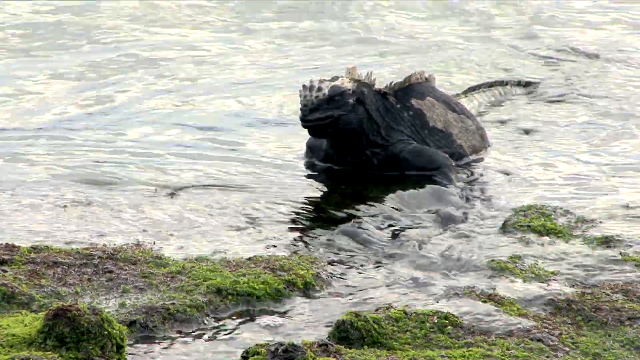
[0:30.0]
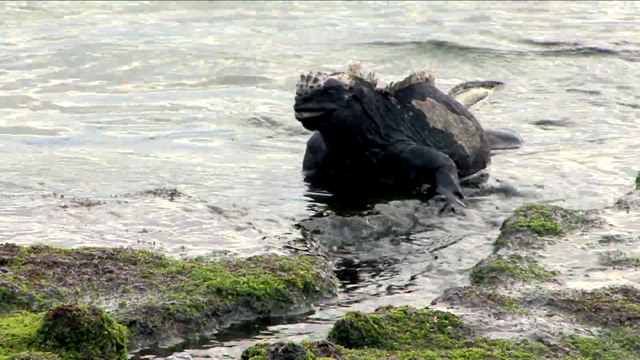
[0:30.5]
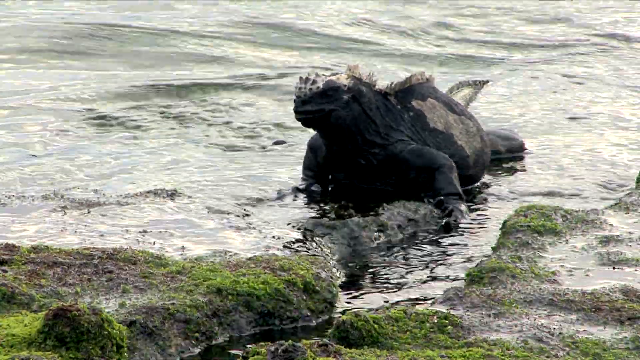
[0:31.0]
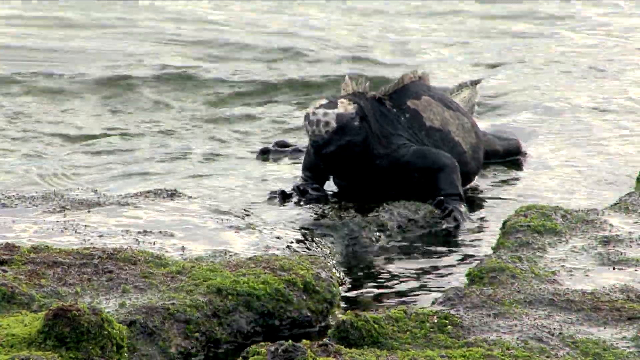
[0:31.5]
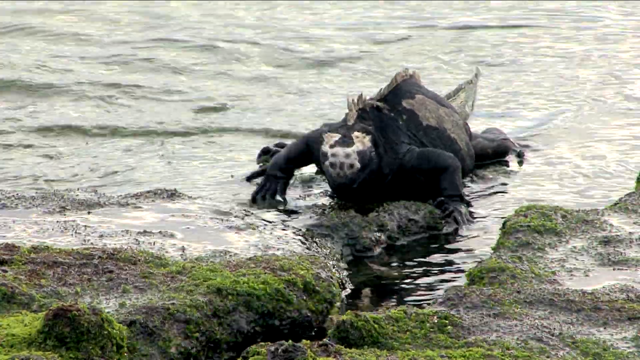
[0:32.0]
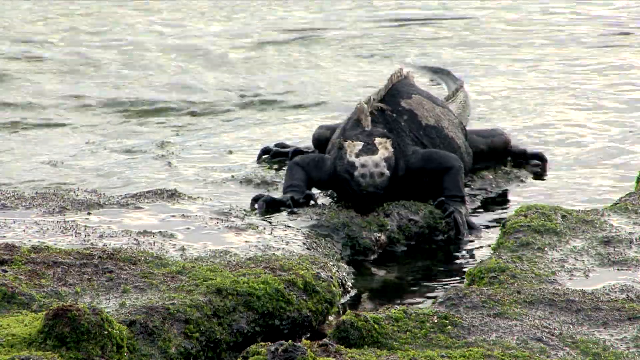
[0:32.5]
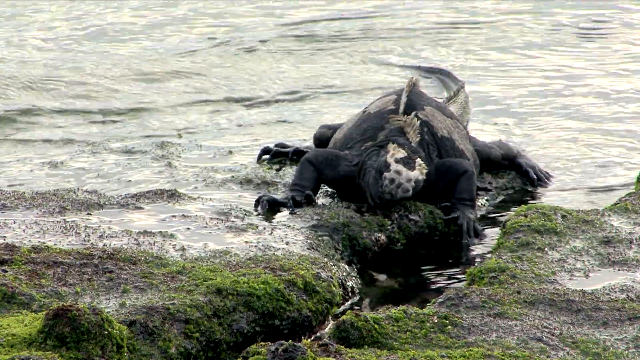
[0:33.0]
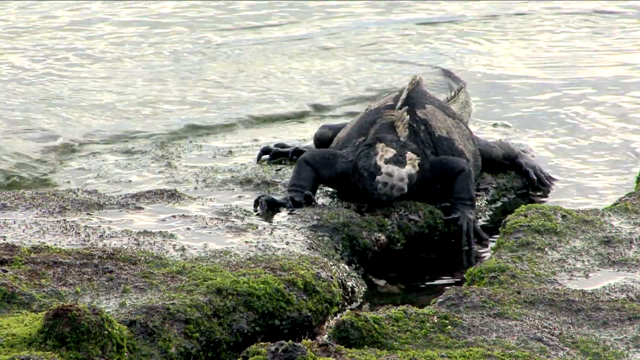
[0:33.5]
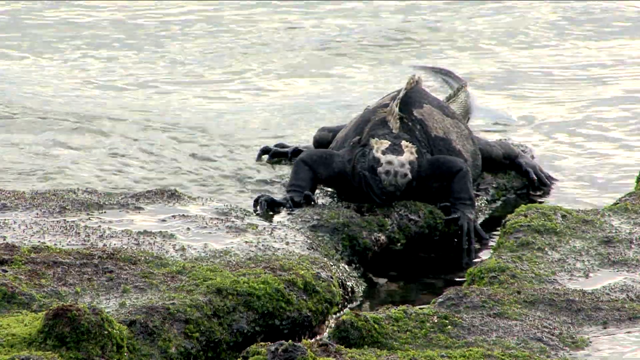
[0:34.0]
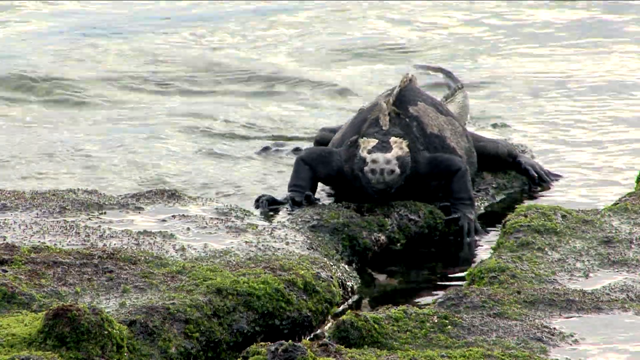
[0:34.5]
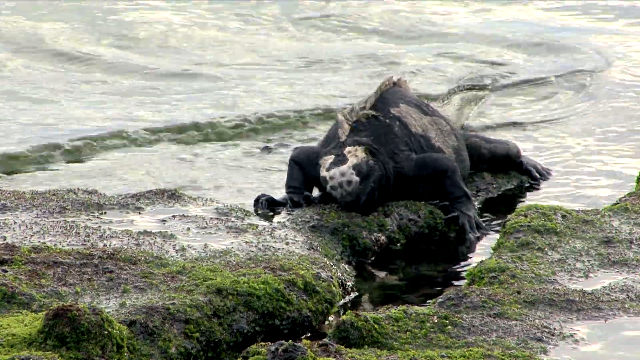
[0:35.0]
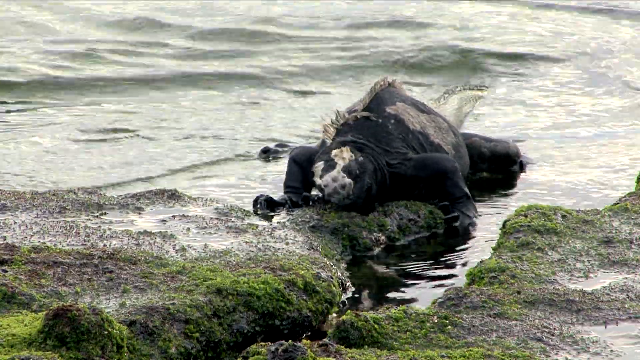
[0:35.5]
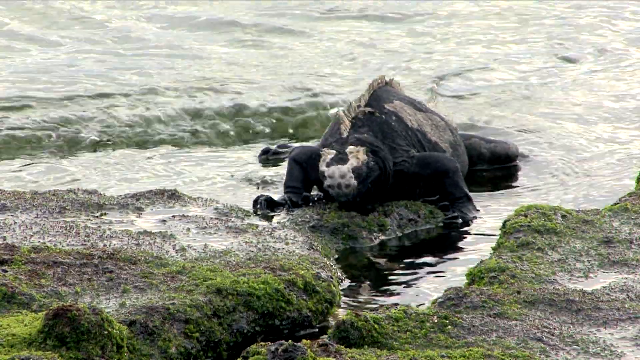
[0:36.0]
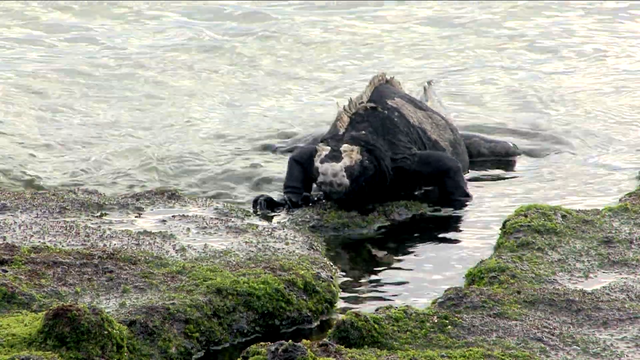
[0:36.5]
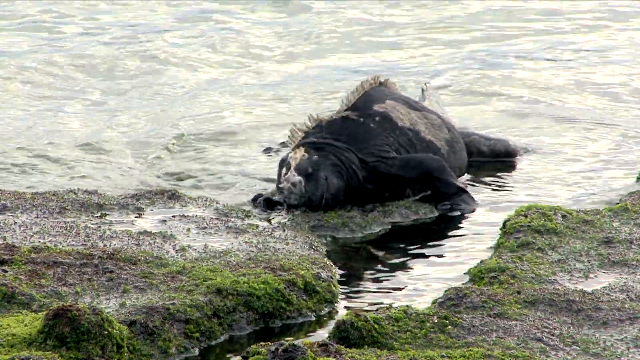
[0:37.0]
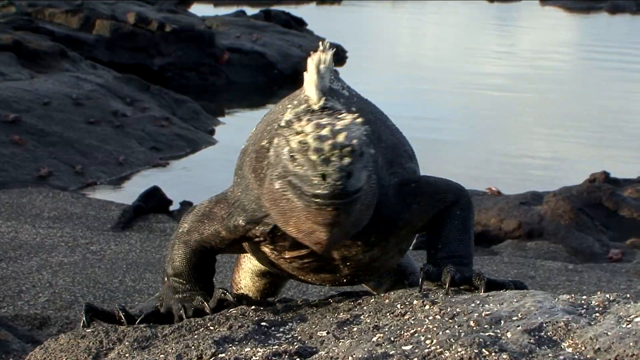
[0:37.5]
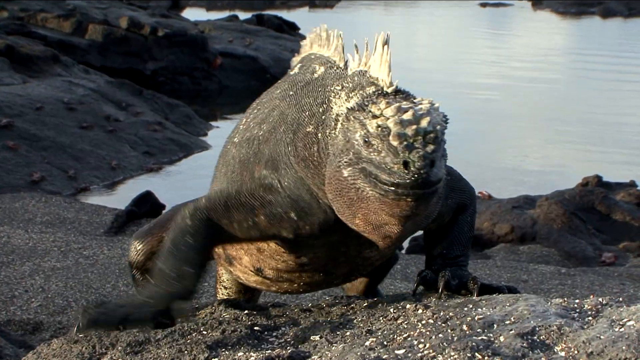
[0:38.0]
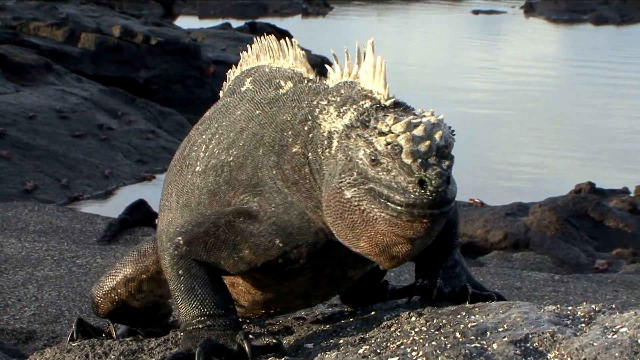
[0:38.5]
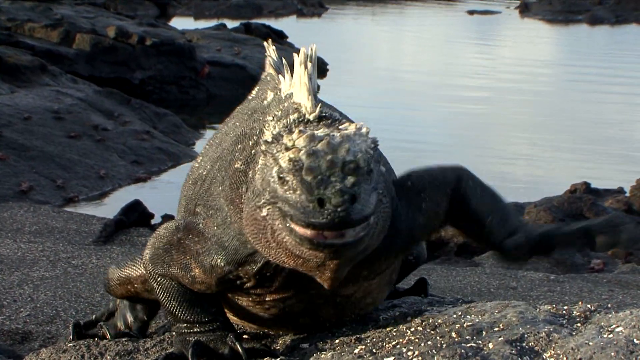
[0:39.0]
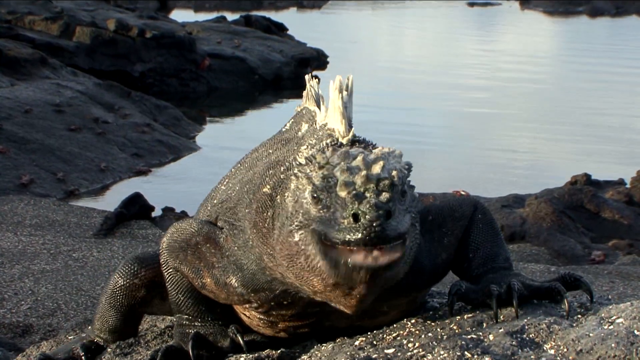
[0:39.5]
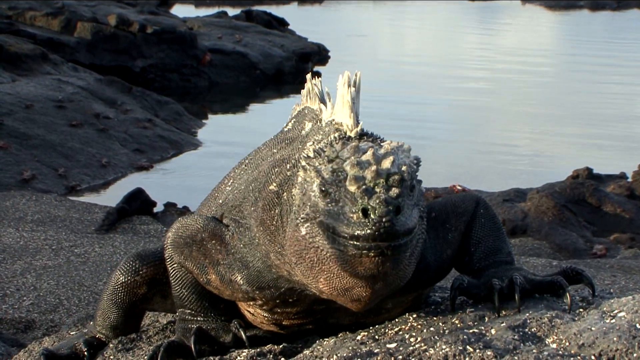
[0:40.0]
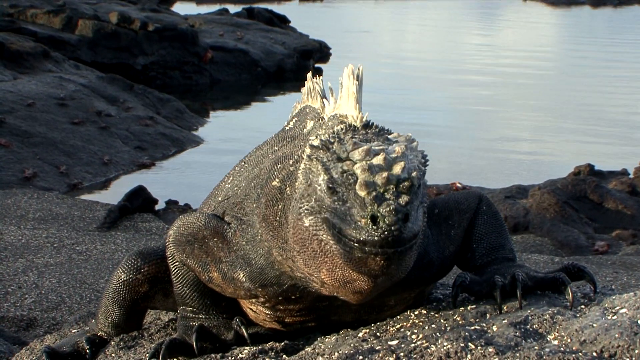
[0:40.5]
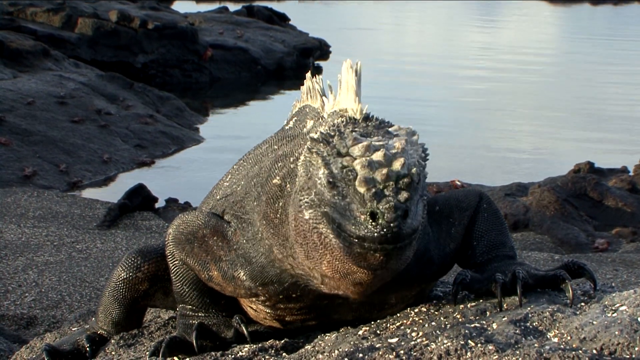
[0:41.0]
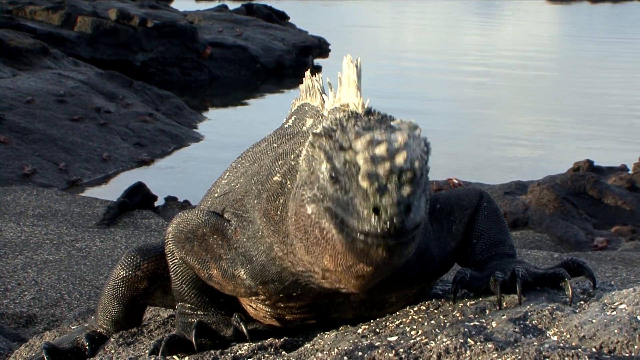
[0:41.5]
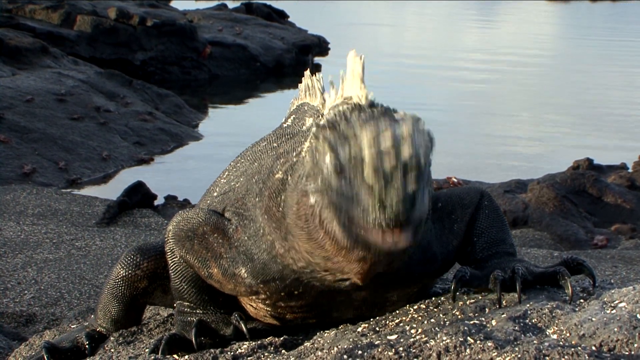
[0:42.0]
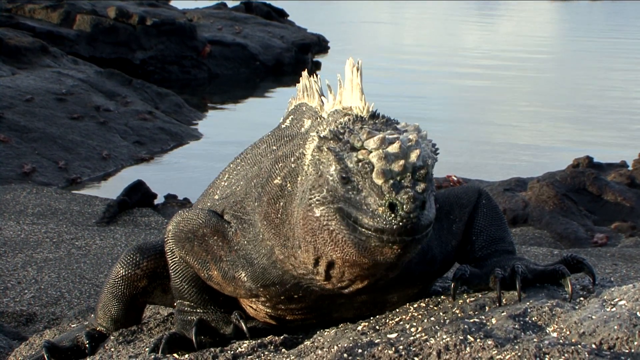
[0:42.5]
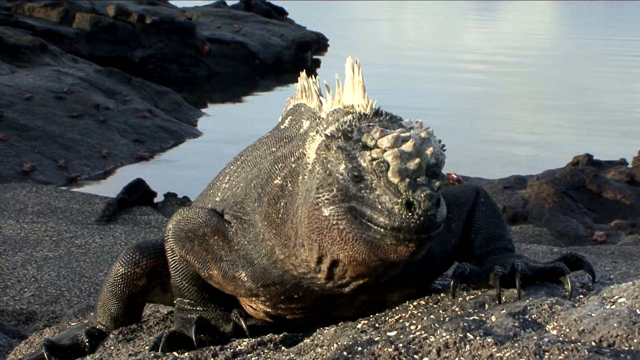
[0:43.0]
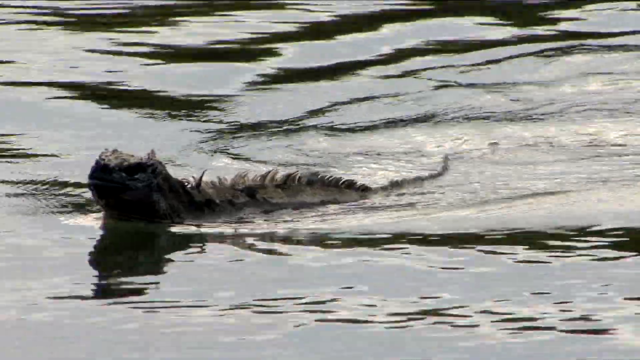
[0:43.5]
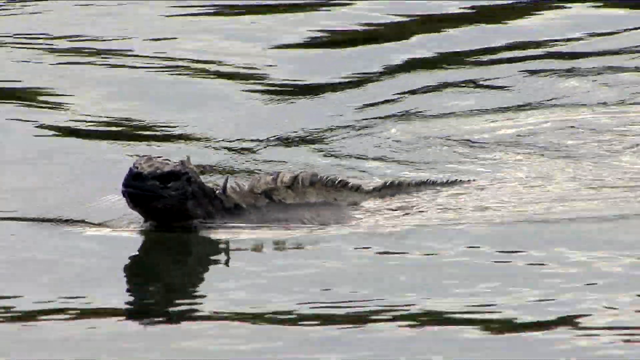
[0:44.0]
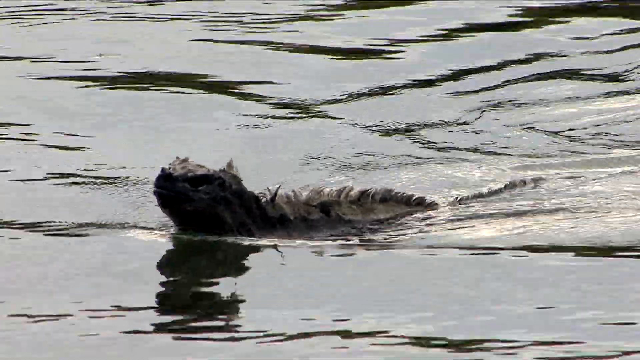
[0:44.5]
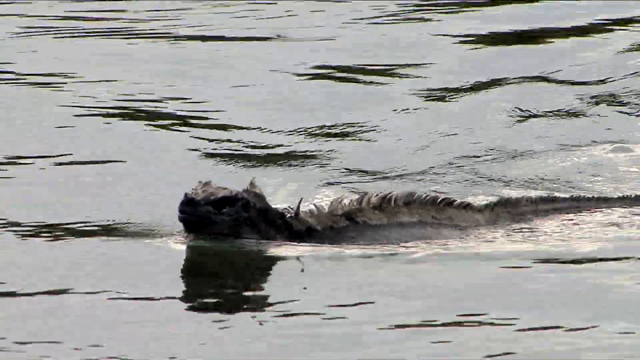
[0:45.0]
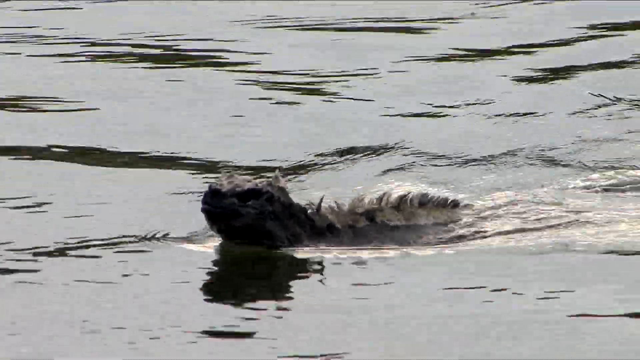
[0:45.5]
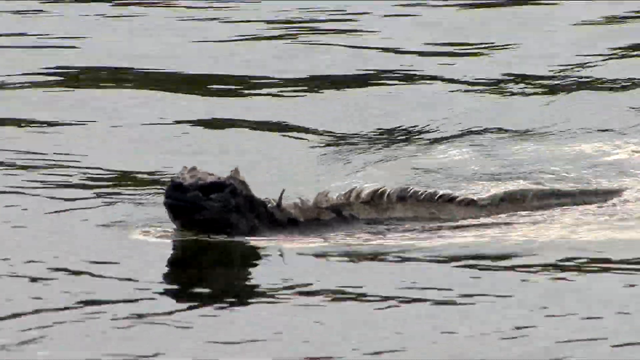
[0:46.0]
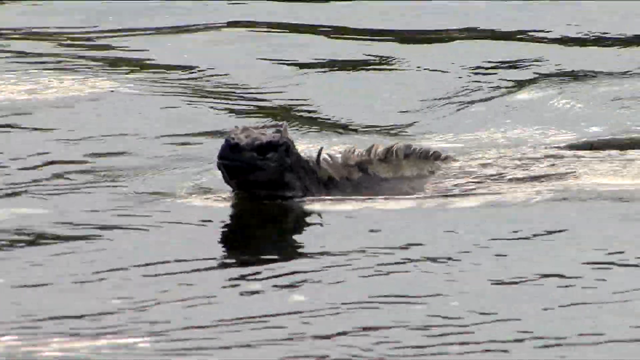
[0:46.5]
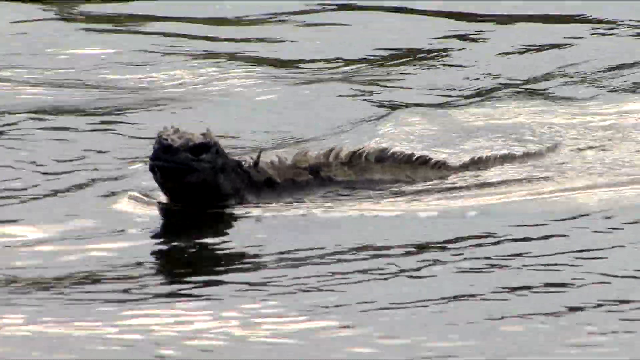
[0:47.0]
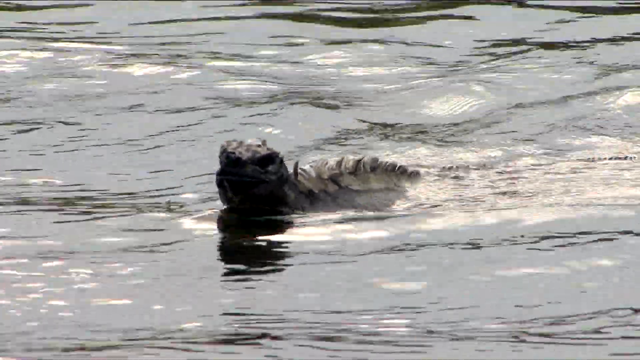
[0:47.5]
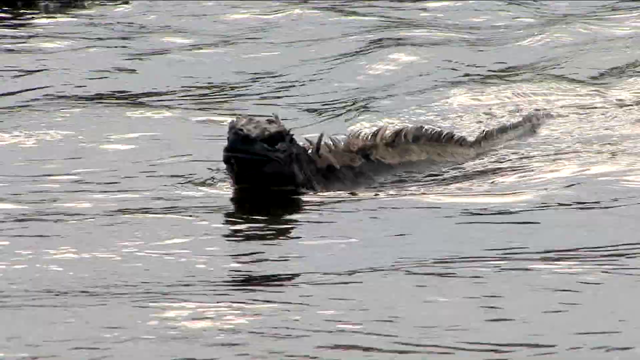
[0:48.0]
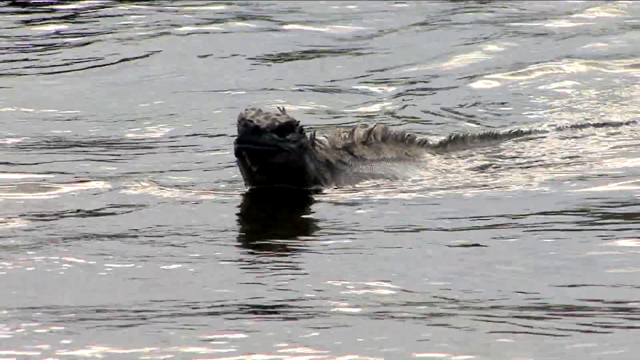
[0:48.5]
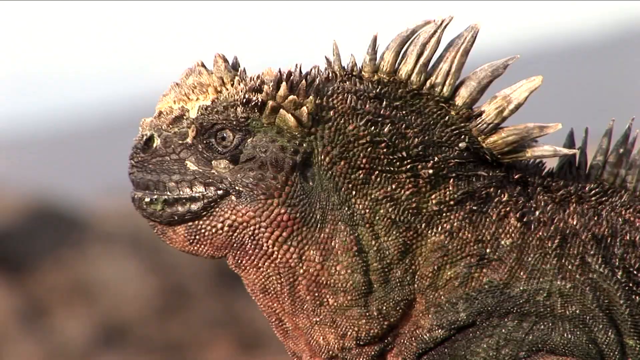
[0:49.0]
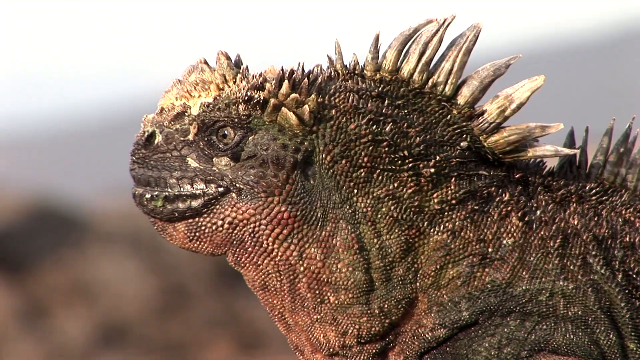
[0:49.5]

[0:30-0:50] The iguana moves forward slowly, moving its tongue. It has sharp spikes from its head to its tail. It sits on a rock with algae on top of it. The scene transitions to the iguana on dry, rocky land, where it moves forward and licks its tongue as if eating something. It has sharp claws, and its face looks like it has stones on it. The scene then transitions to the iguana swimming in a river, its tail moving left to right as its head sticks above the water. Next comes a close-up of the side of the iguana's face as the sun hits it, showing its eyes, mouth and the sharp scales on its face. The scene changes are smooth, and the iguana is the main focus, with no other animals seen.